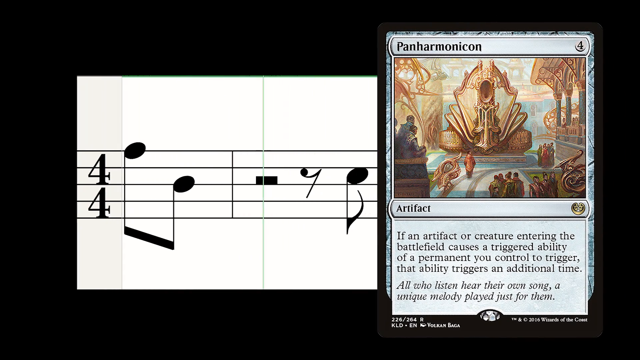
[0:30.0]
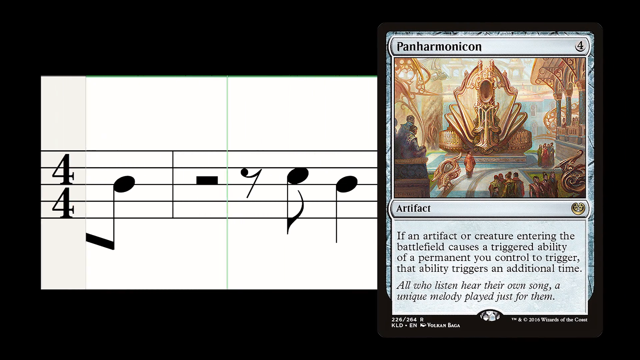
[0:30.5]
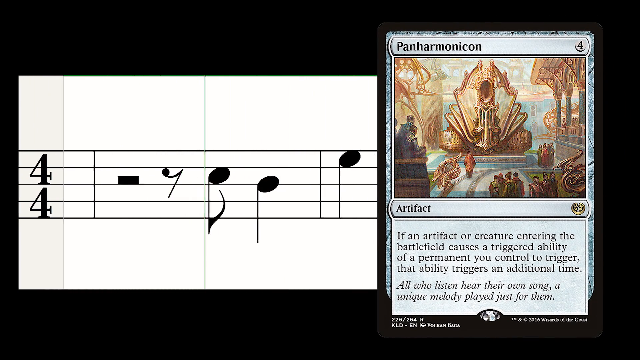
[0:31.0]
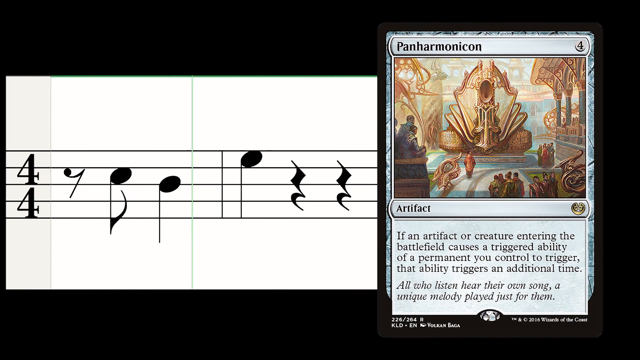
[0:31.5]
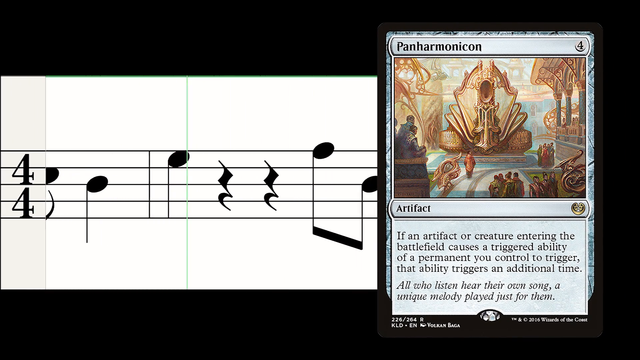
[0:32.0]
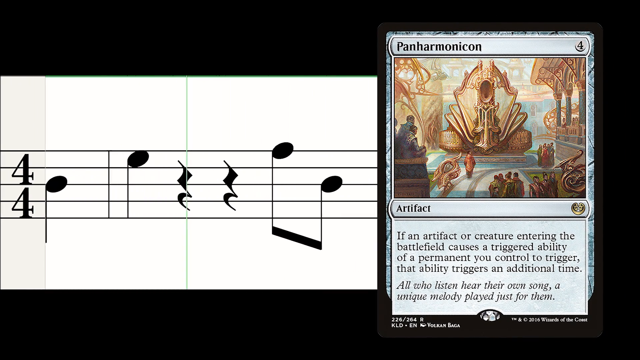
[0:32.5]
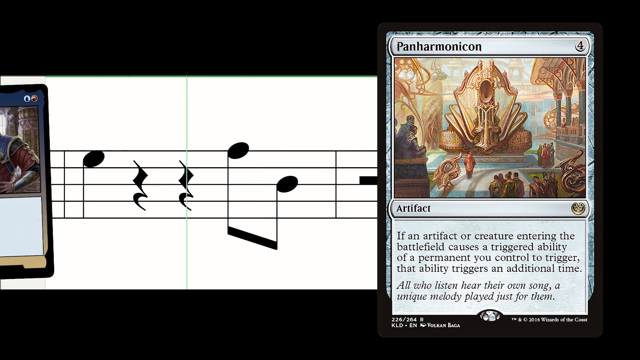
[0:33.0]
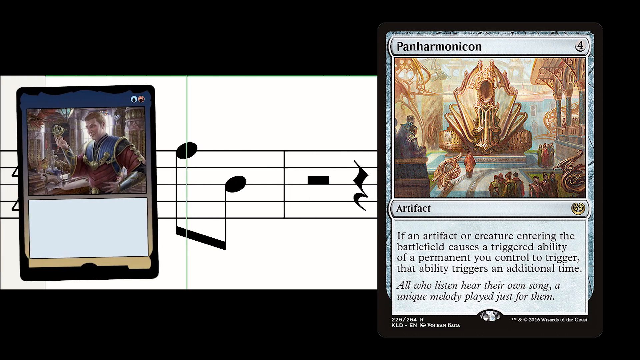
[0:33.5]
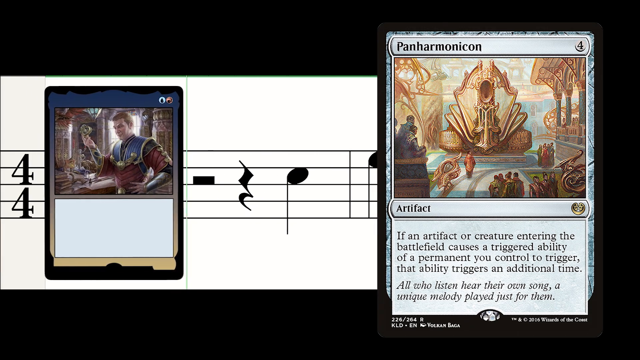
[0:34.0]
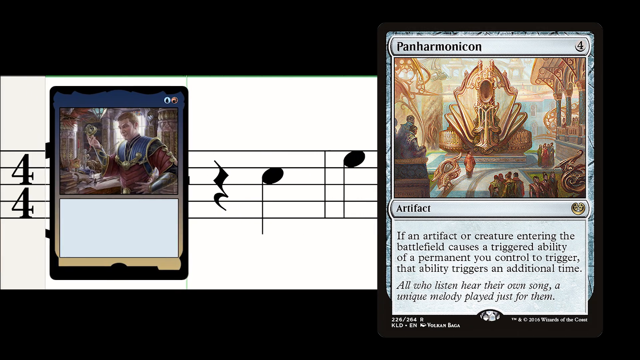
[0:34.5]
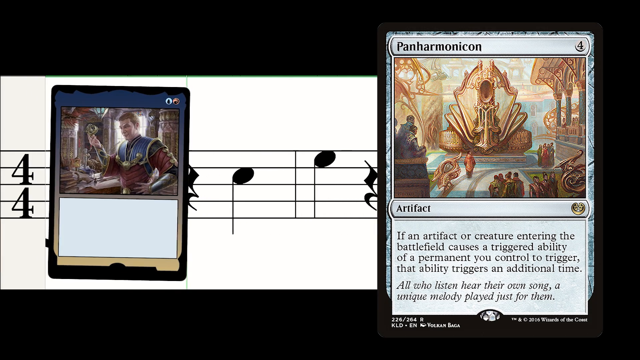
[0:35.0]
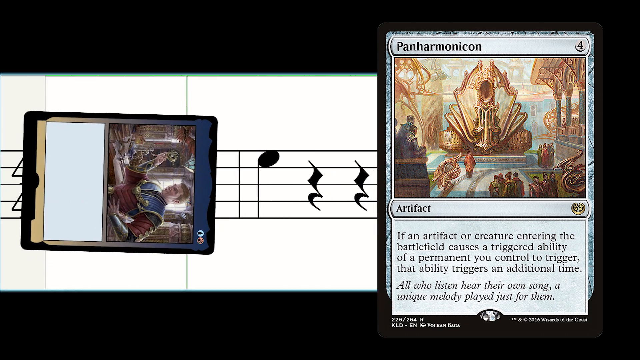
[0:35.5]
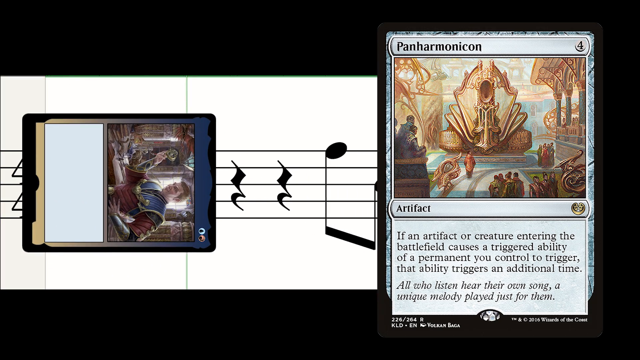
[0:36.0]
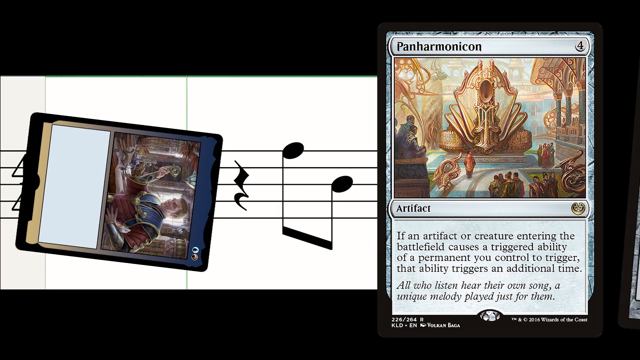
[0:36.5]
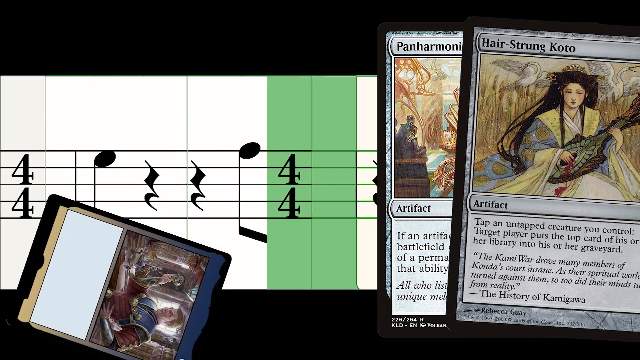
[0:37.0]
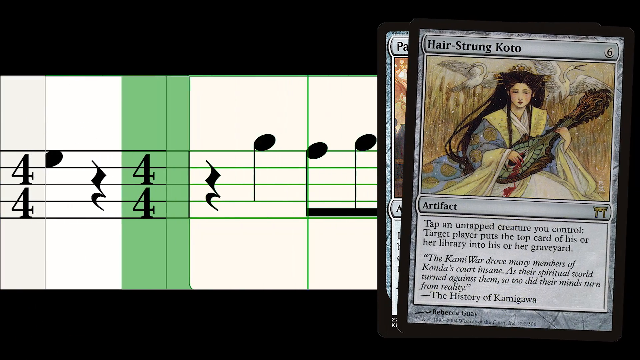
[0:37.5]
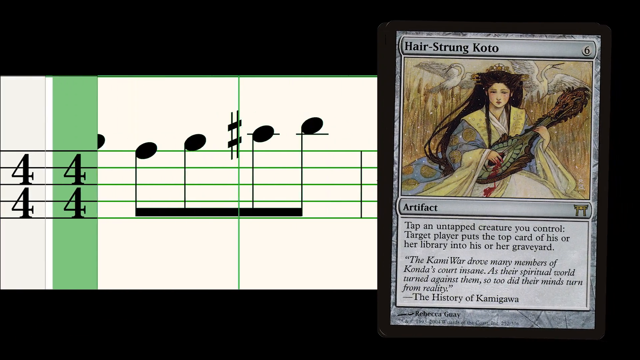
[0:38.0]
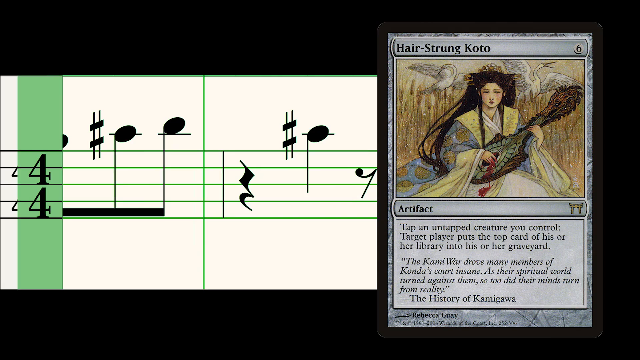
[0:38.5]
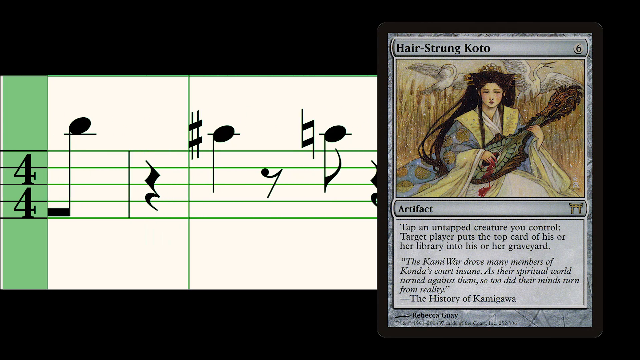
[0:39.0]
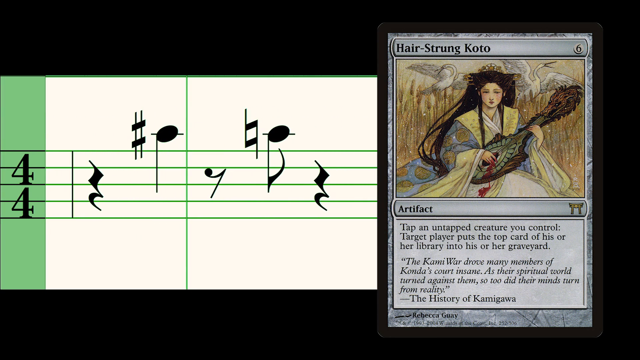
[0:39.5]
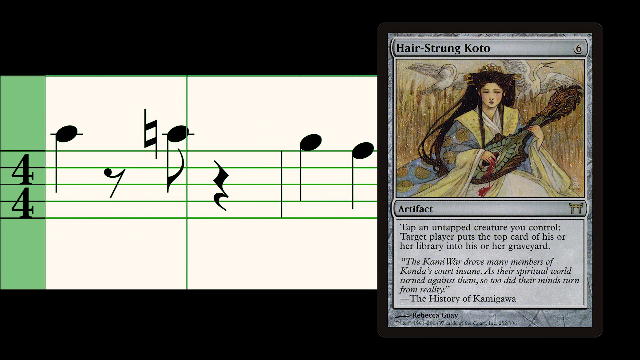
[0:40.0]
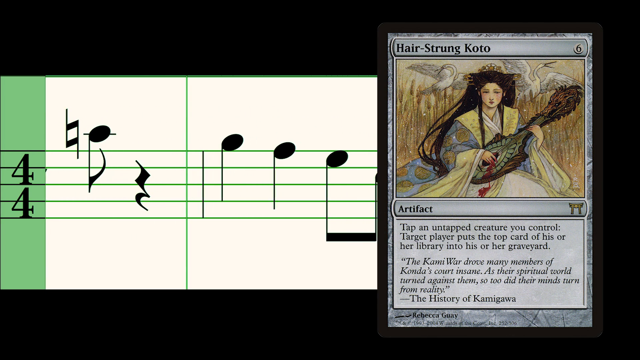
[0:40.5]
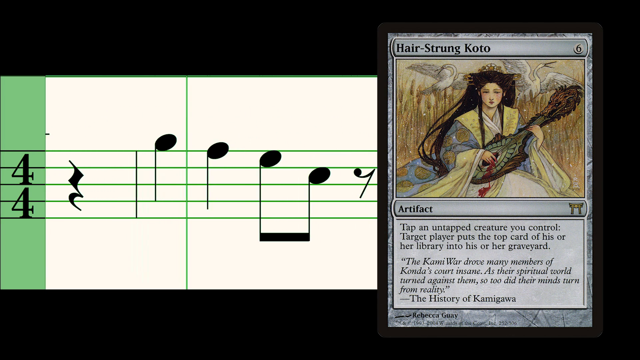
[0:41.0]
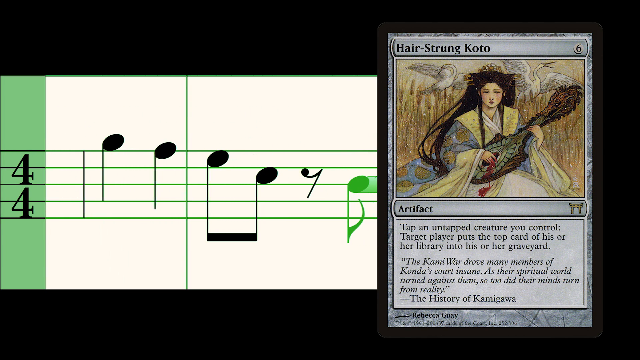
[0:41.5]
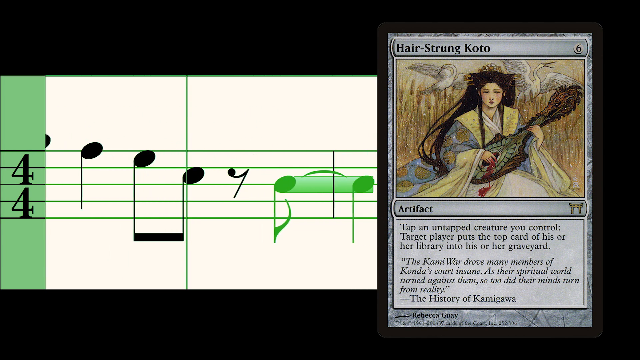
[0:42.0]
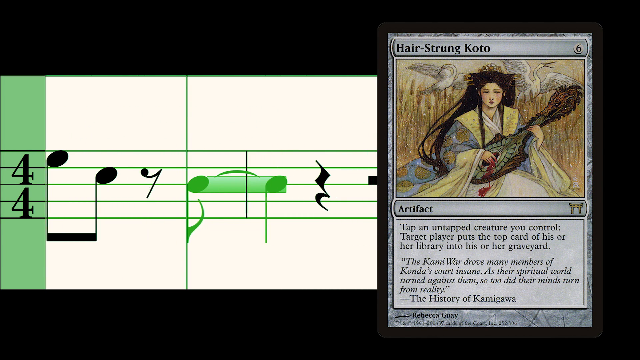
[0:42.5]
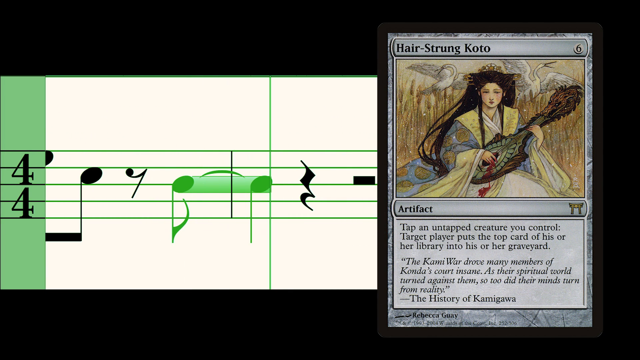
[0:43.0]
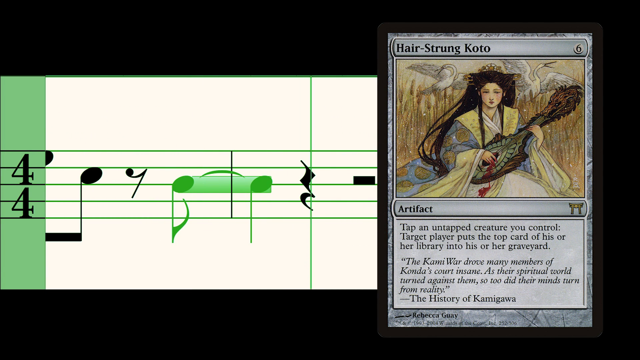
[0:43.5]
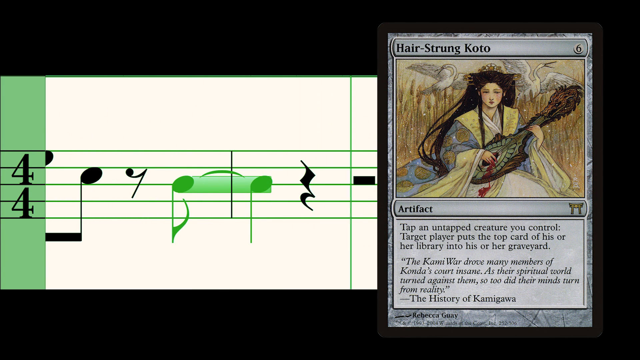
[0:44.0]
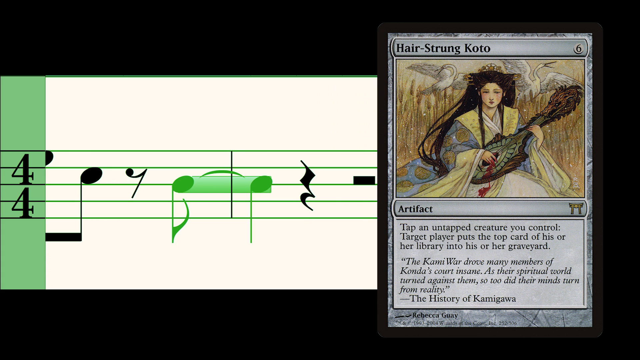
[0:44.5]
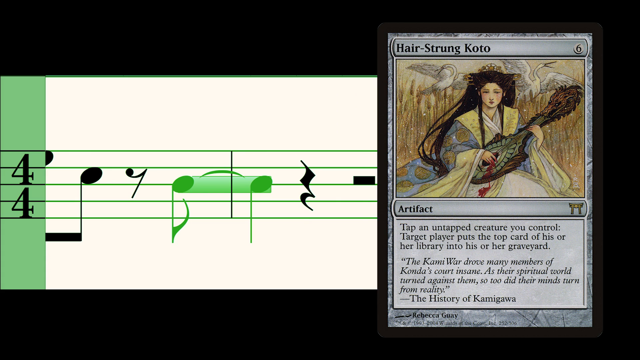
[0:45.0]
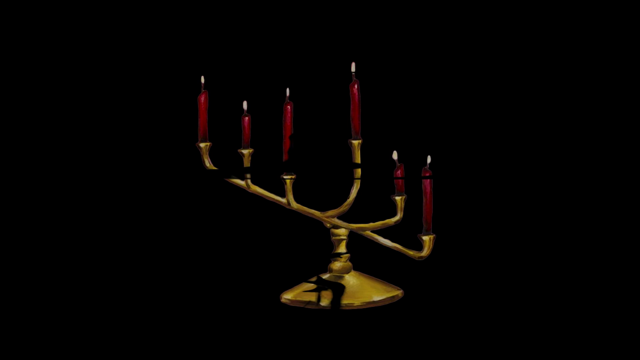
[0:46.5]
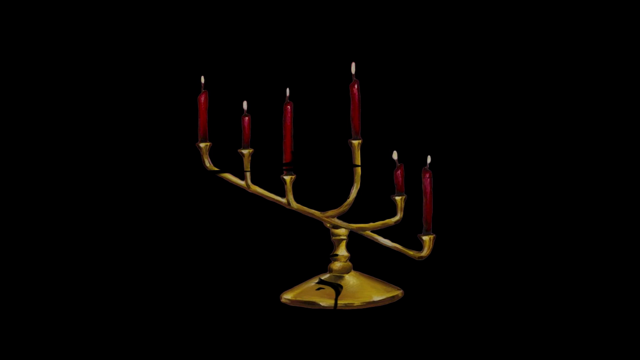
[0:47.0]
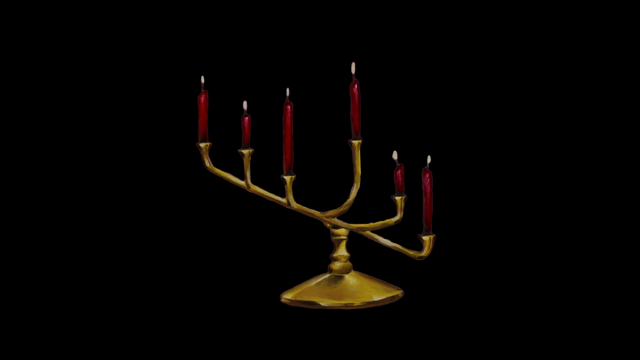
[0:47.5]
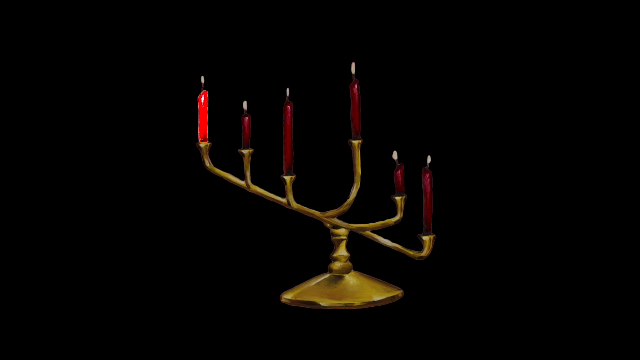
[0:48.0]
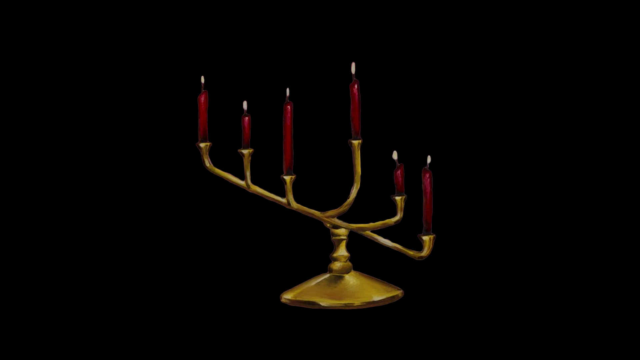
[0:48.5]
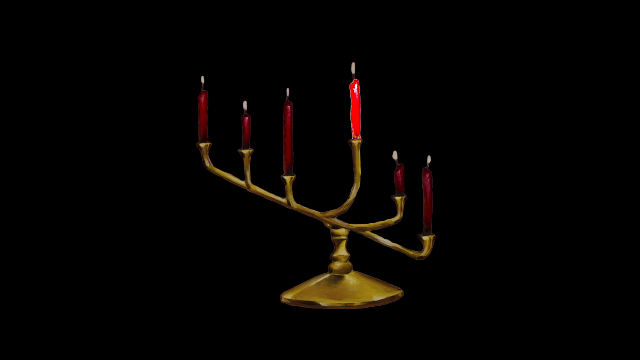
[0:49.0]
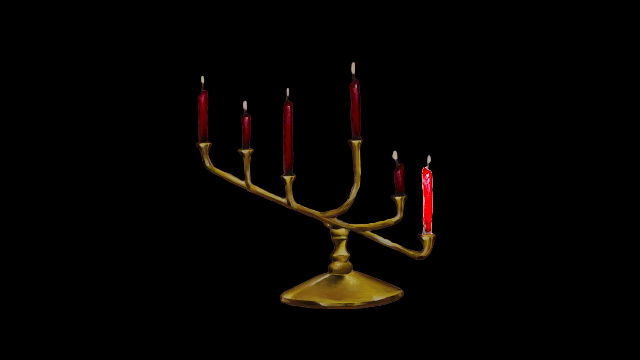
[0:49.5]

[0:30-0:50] The same card and music notes remain, the notes still scrolling from right to left. A new, smaller card appears from the left side of the screen; it is kind of blue at the top and yellowish gold at the bottom, with a black border around the whole thing. Its small image in the top center looks to be a man in red and blue armor. The card flips 90 degrees clockwise and then falls off the screen as if pulled down by gravity. Another card appears from the right, a whitish-gray card with "Hair Strong Koto" at the top. Its image shows a woman in very traditional, sort of Asian dress in blues, greens and whites, playing a guitar-like instrument that kind of looks like it might be made of dragon scales. In the background there appears to be wheat growing, and what look like storks are on both the left and right sides of her toward the top of the image. As her card sort of overlaps the previous card, the white music box gets a green border, its lines turn green, and some of the notes turn green. Next comes a shot of something almost like a menorah, gold, with six lit red candles of different sizes. It is not symmetrical, slanting downward from left to right. The candles start glowing in order from left to right, one at a time.